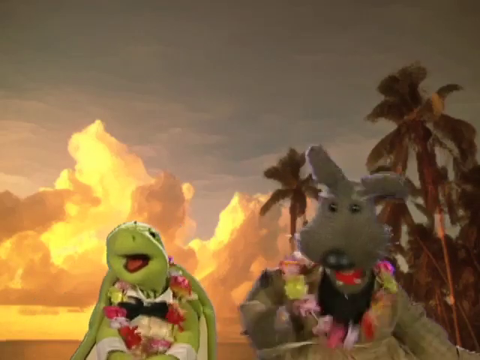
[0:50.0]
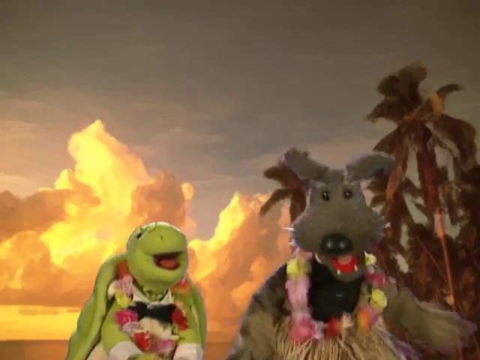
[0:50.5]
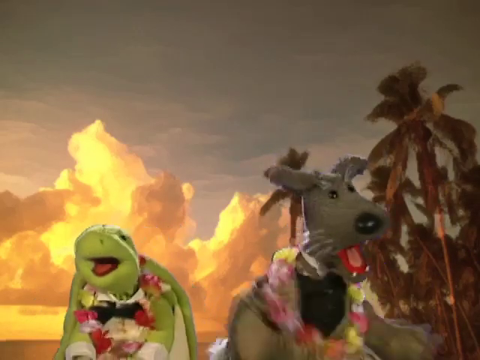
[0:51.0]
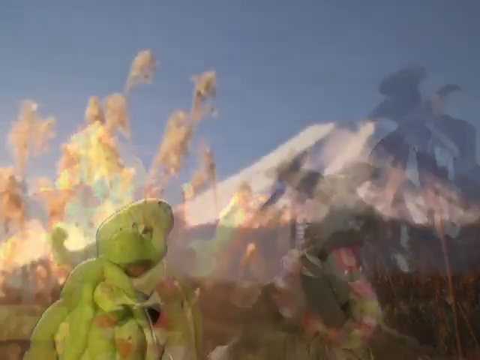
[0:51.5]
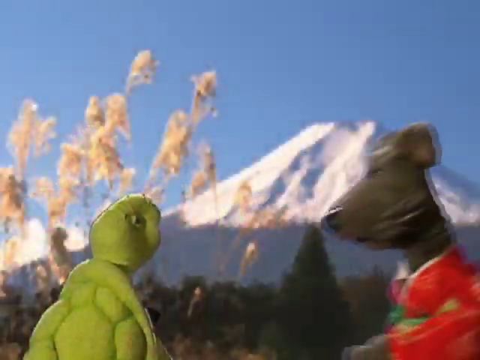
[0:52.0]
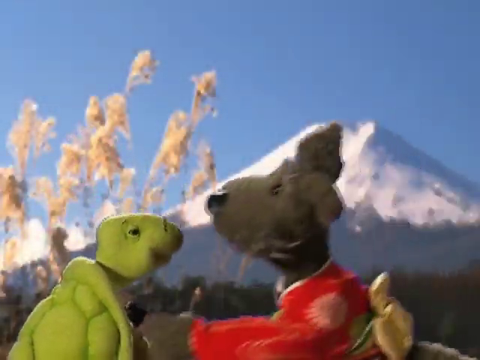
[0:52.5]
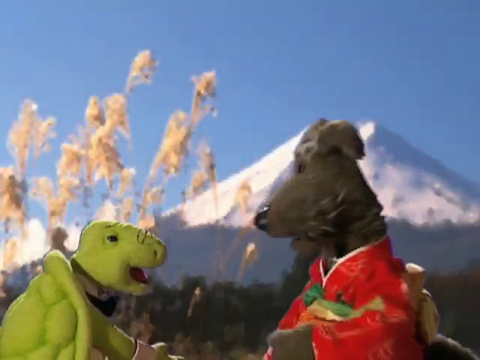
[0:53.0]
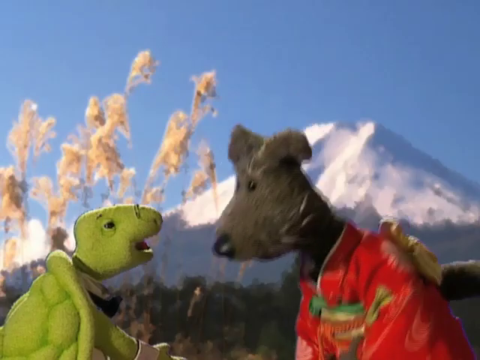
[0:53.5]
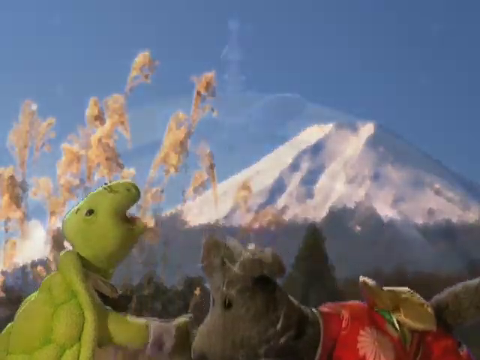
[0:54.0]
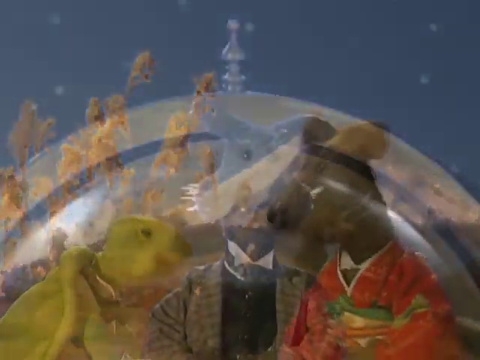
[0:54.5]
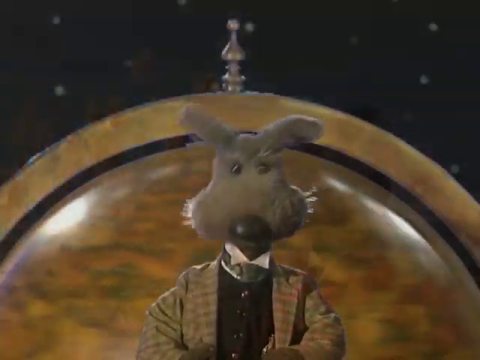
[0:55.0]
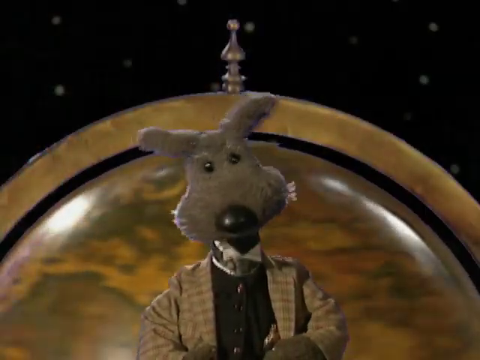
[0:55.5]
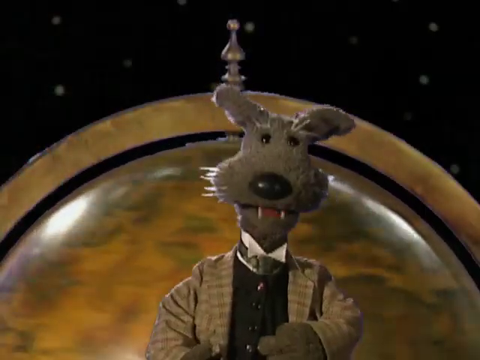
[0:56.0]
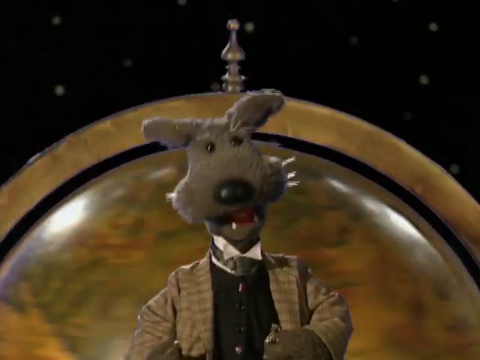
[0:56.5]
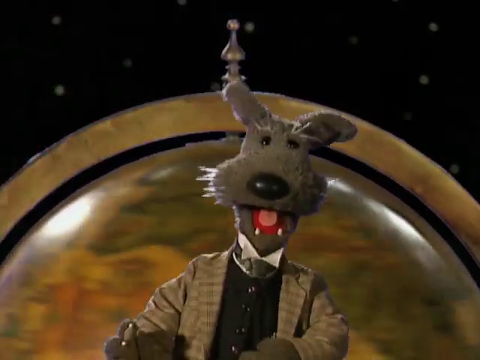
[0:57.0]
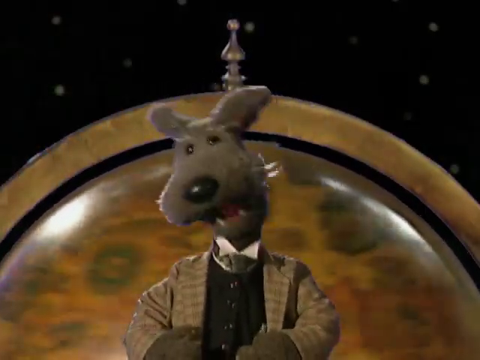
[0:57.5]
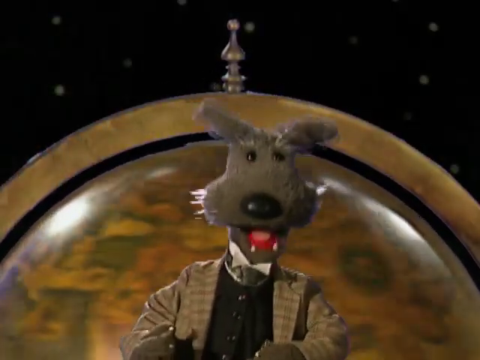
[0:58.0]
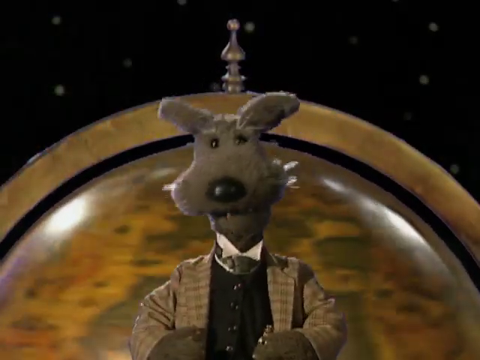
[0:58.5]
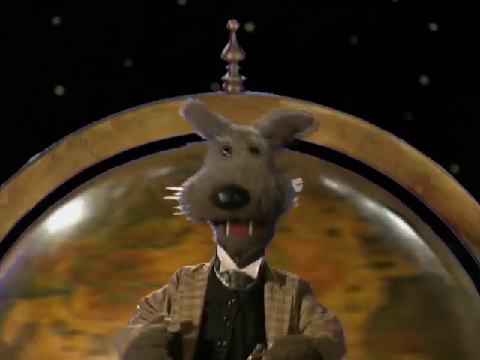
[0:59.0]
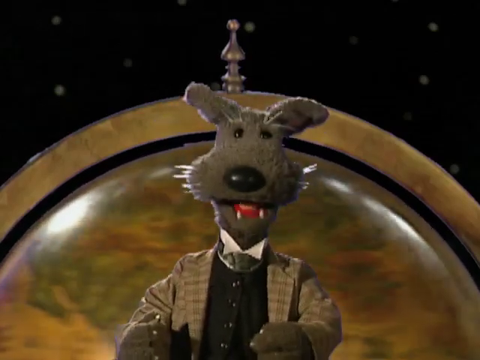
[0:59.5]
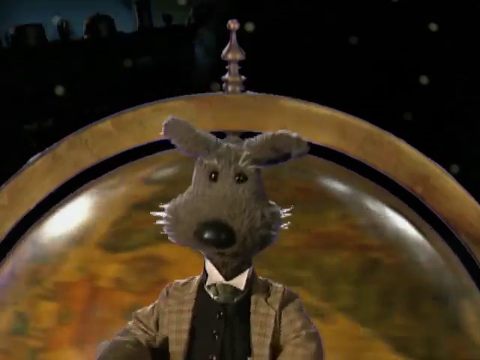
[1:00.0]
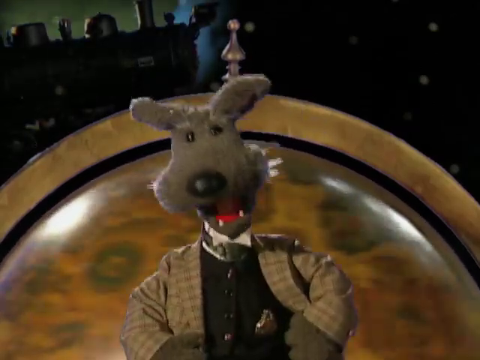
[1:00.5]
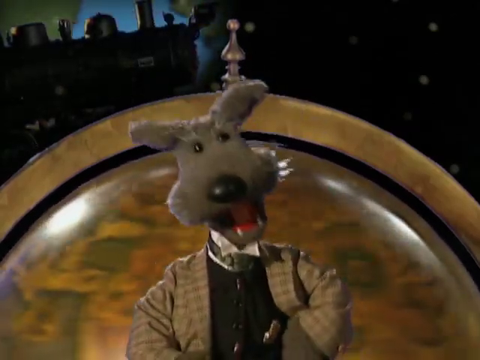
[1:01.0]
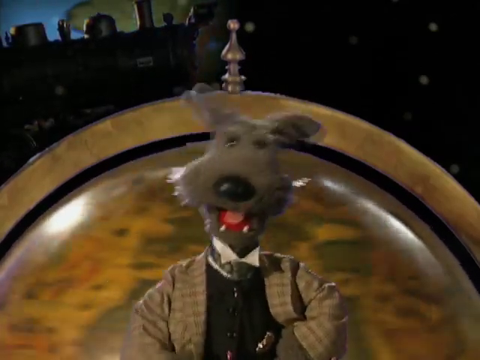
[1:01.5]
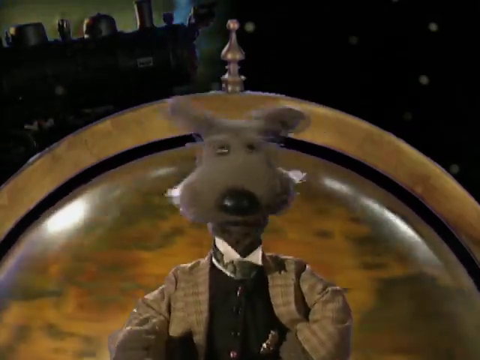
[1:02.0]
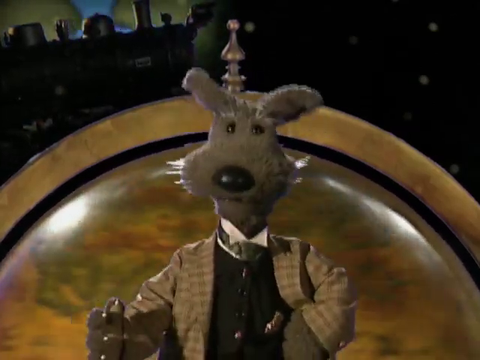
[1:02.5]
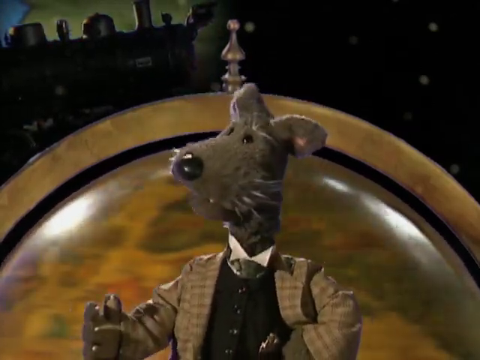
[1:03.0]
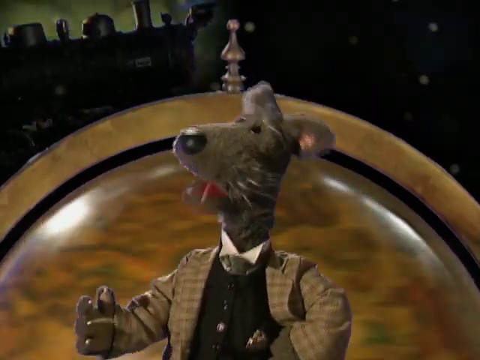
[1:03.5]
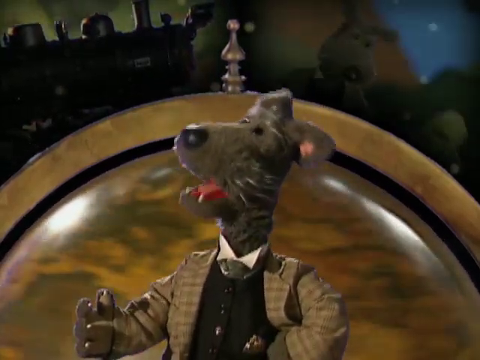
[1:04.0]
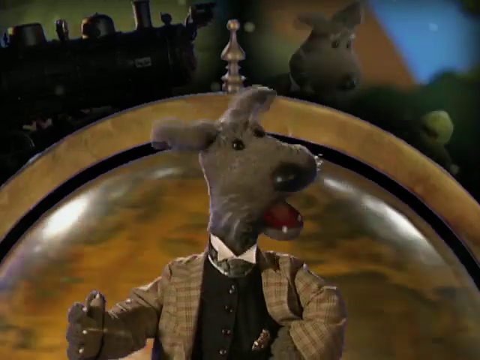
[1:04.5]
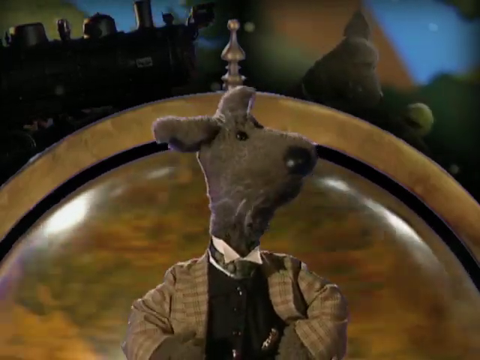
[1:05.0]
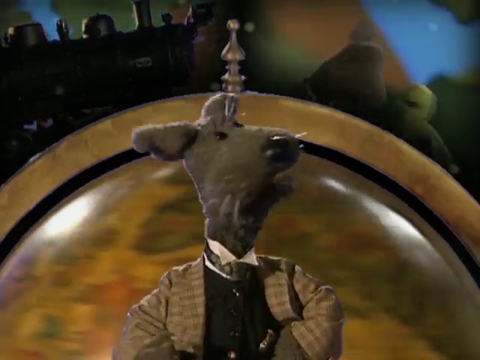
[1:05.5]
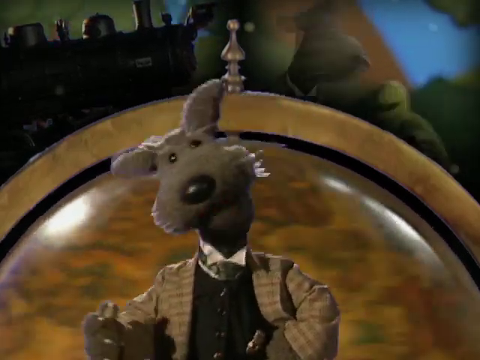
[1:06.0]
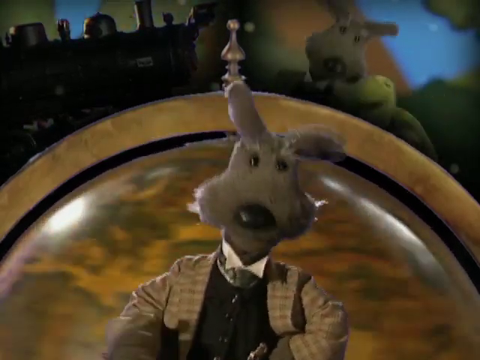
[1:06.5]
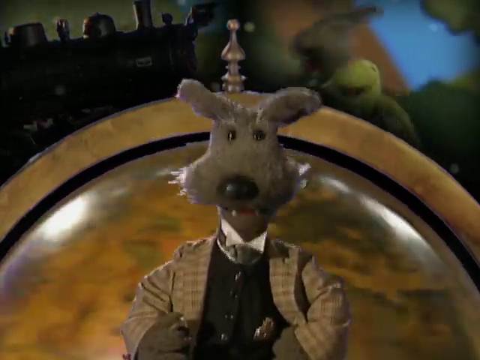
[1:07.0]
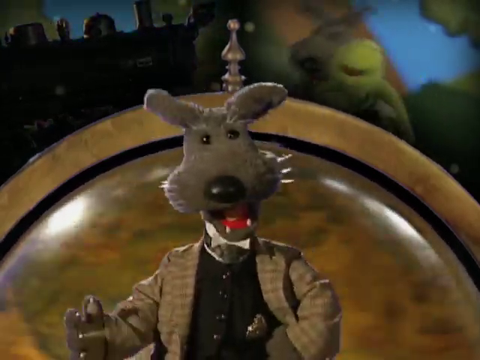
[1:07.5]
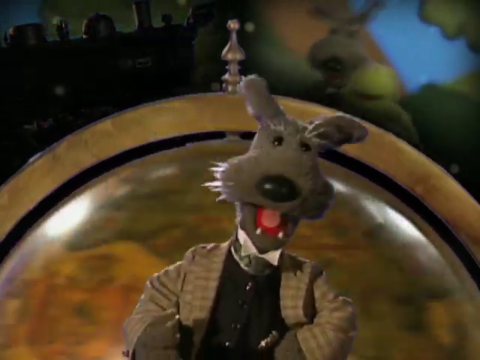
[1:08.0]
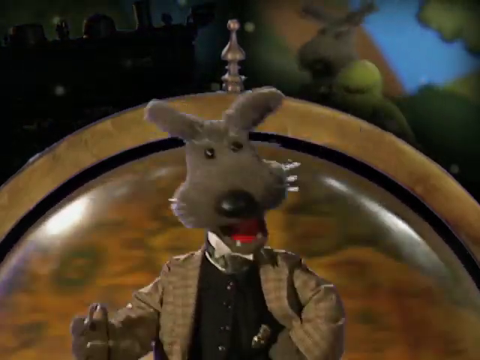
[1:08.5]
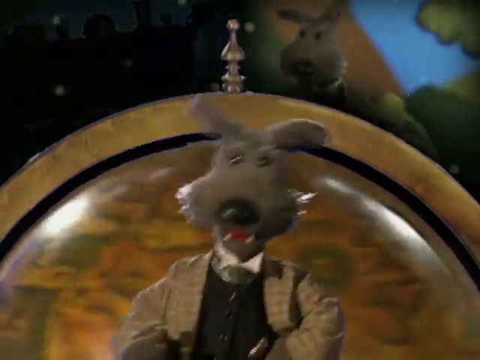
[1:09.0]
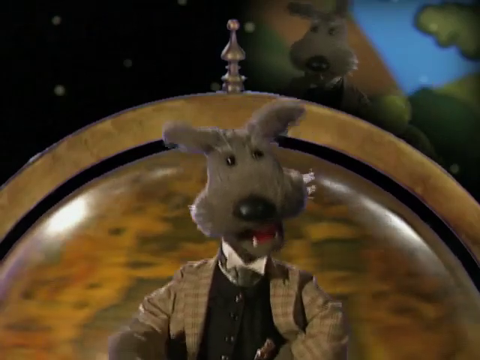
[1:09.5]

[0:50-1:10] Two puppets, a turtle on the left and a dog on the right, are in front of a background showing palm trees and clouds at sunset. Both animals wear a lei around their neck, and they both seem to dance, shaking their bodies a good amount as if happy. The video cuts to the turtle and the dog, with the dog dressed in traditional Japanese clothing, in front of a background of Mount Fuji. It cuts once more to just the dog looking at the camera, wearing dress clothes from the neck down. Behind him is a large globe which spins as he speaks to the camera. He moves in an excited way, his head and mouth making exaggerated motions. At the top, above the globe, are clips seemingly from his trip, including him and the turtle, and he looks up at them as if reminiscing.